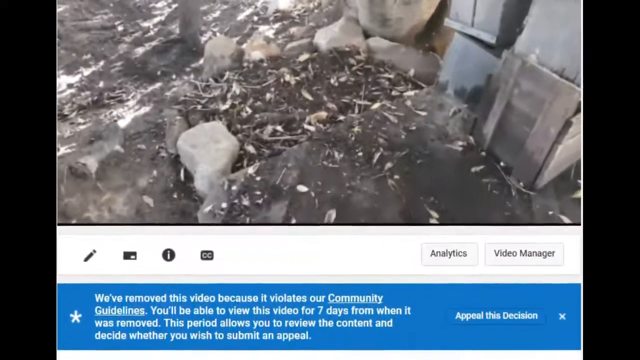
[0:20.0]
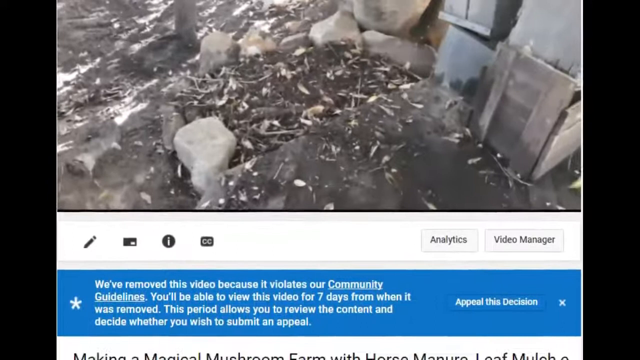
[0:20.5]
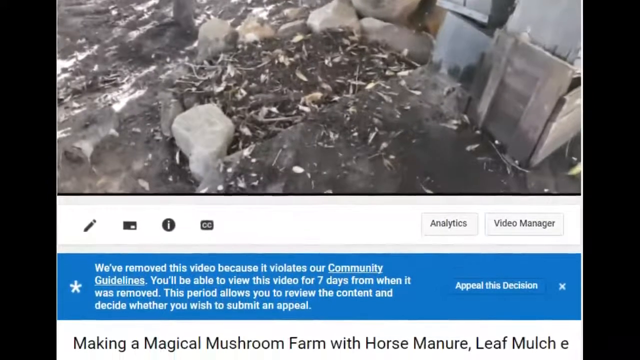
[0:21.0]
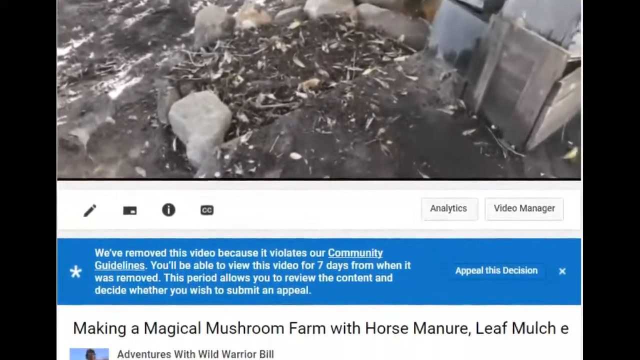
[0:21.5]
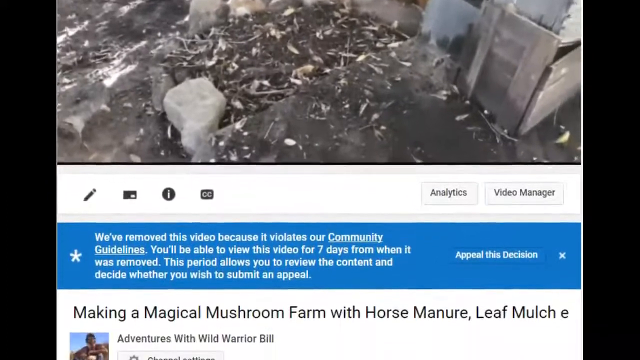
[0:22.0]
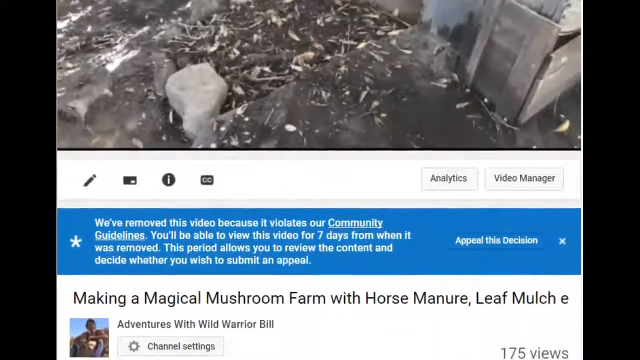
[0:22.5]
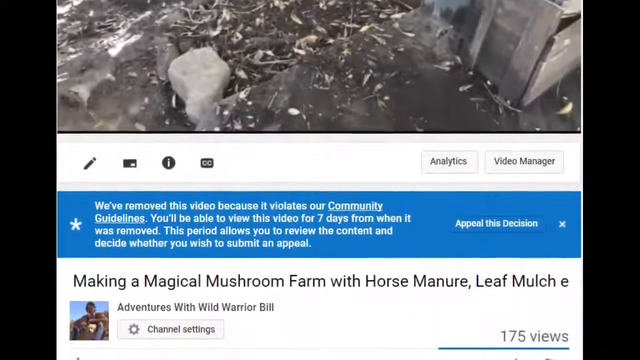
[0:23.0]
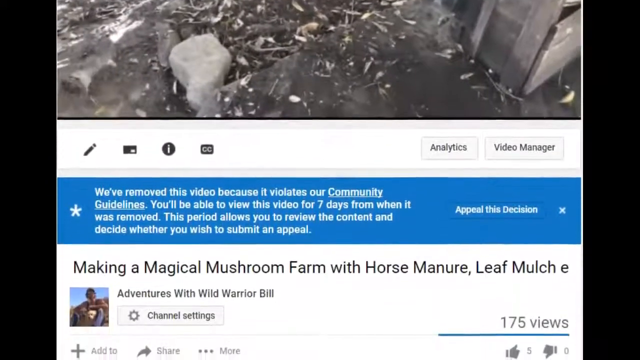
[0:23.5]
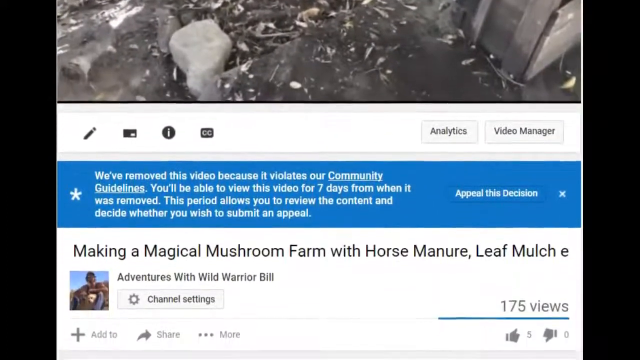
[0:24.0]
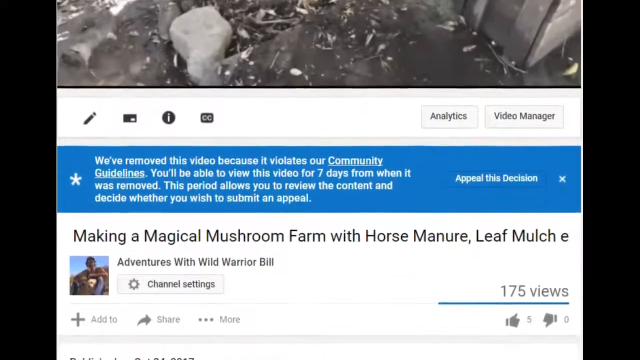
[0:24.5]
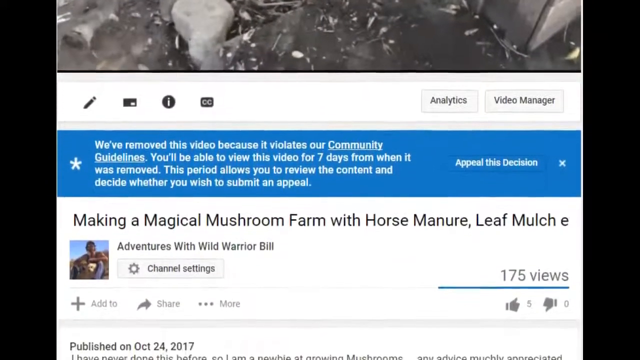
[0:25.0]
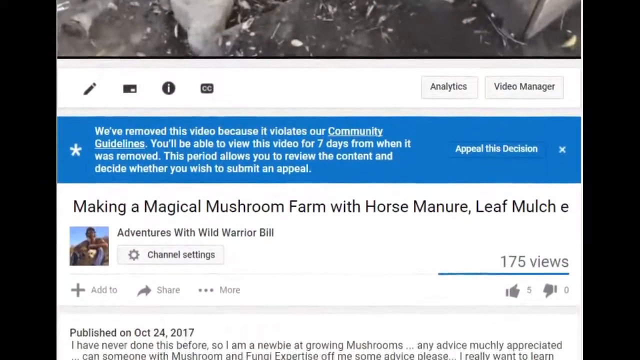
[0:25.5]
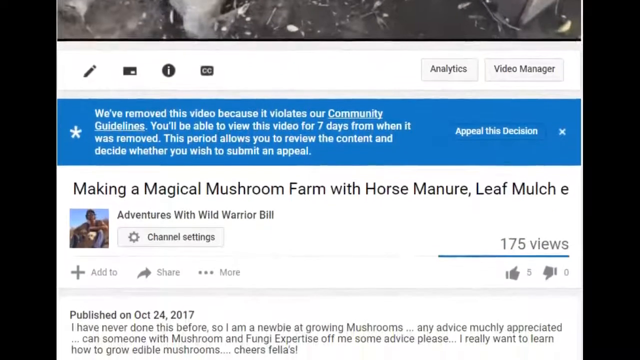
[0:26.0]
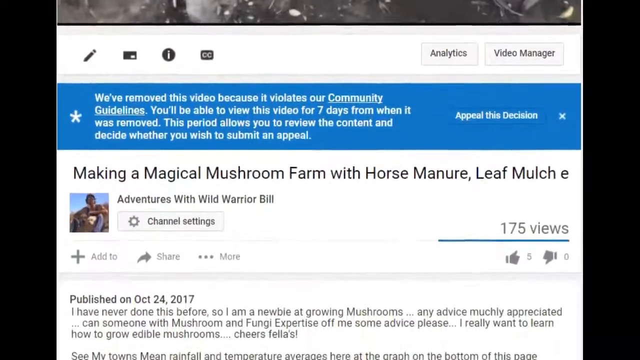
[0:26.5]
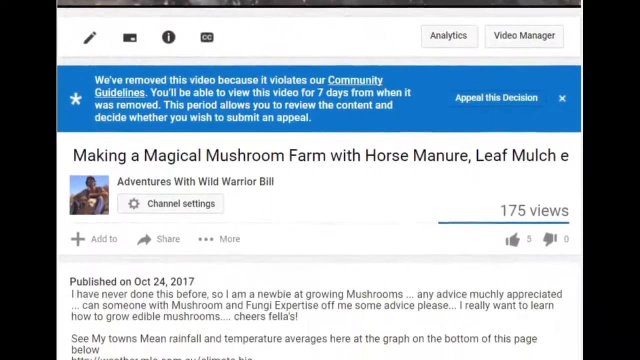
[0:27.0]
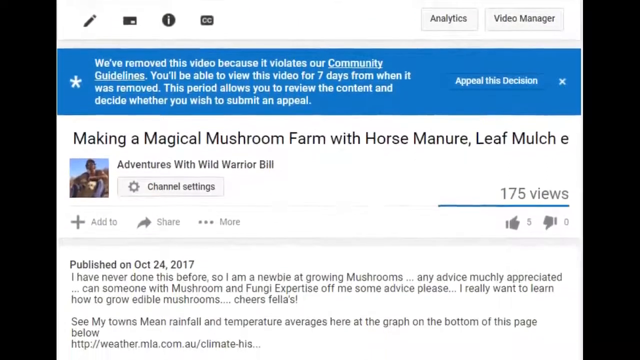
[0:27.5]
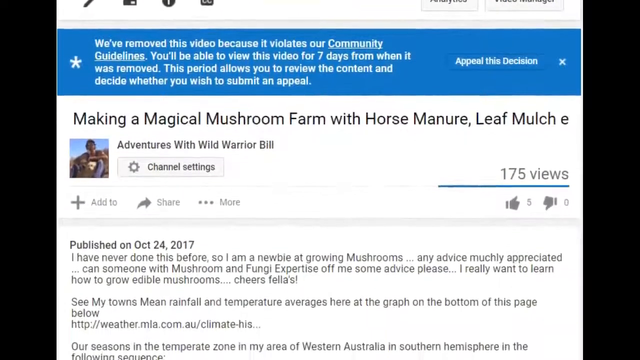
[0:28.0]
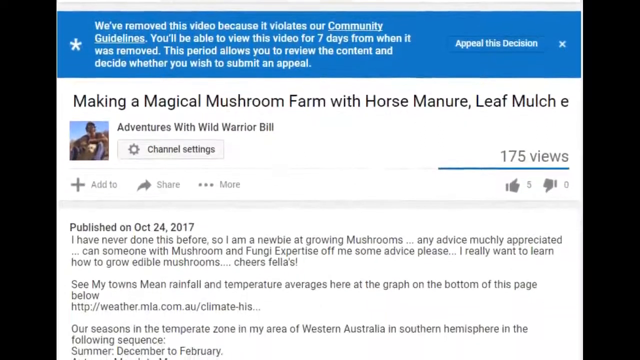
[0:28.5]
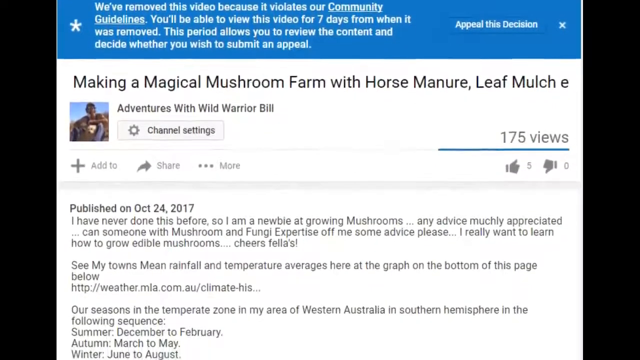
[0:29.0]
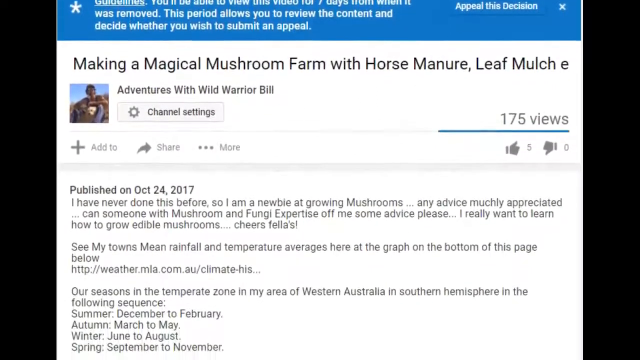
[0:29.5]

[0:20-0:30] The second picture appears to show mushrooms being harvested. Another picture shows stones being put down with manure put on them, along with shade and light for growing mushrooms.